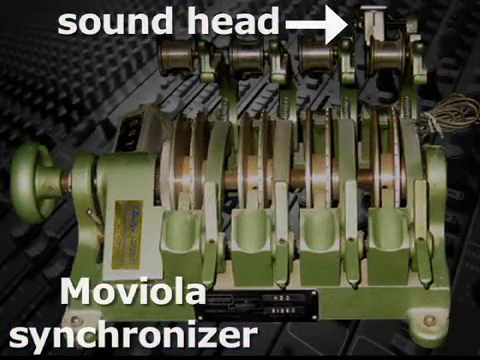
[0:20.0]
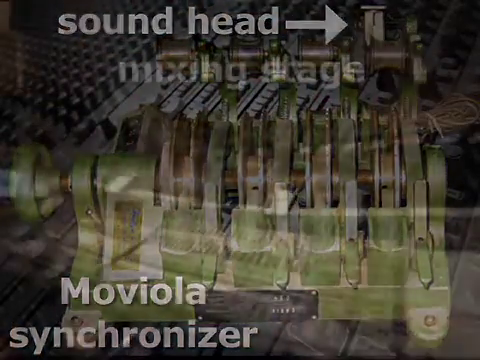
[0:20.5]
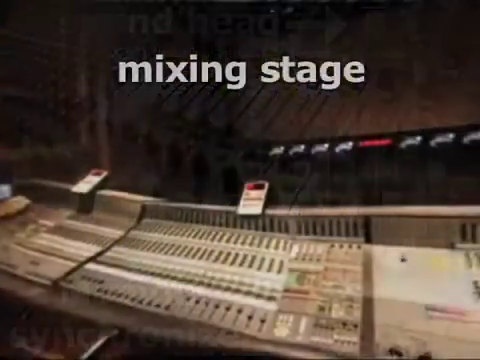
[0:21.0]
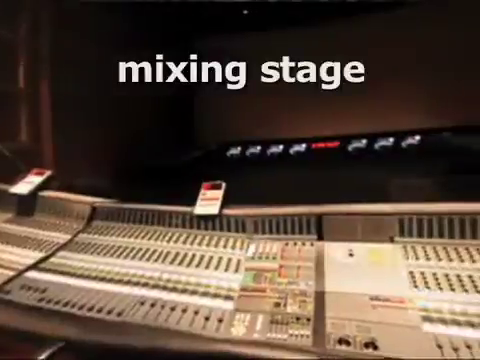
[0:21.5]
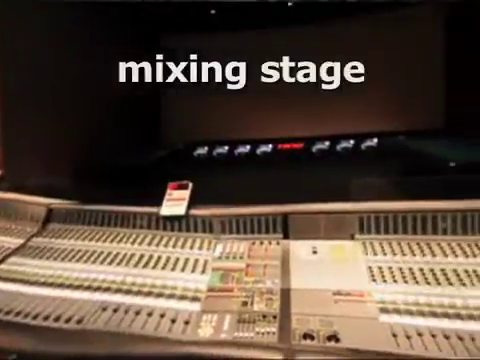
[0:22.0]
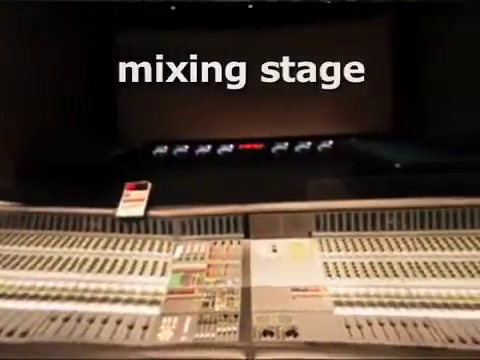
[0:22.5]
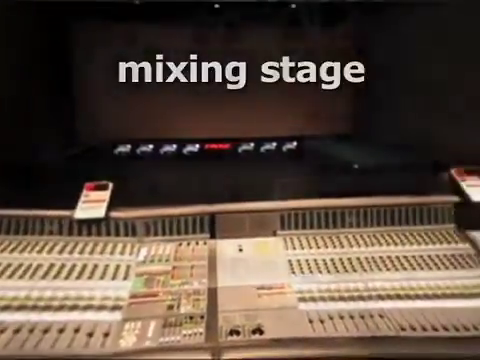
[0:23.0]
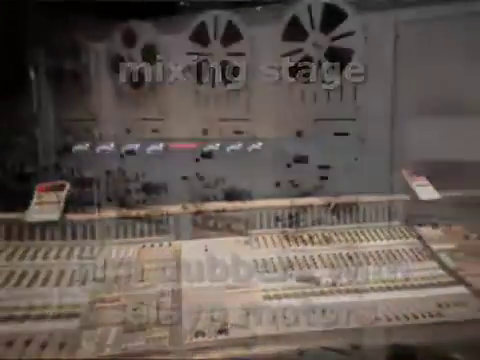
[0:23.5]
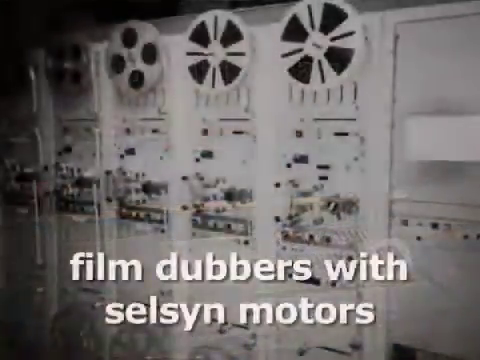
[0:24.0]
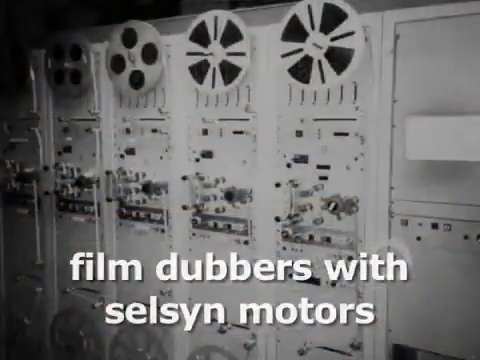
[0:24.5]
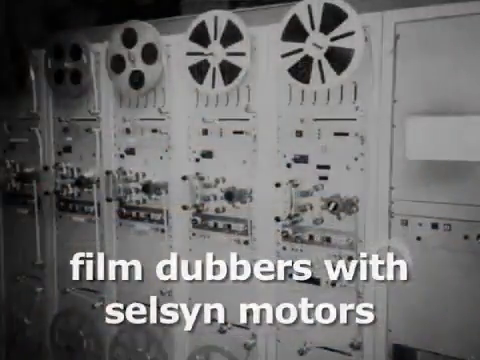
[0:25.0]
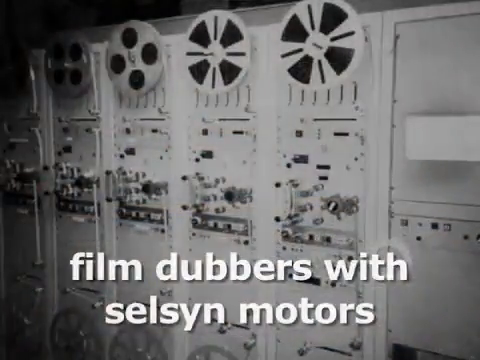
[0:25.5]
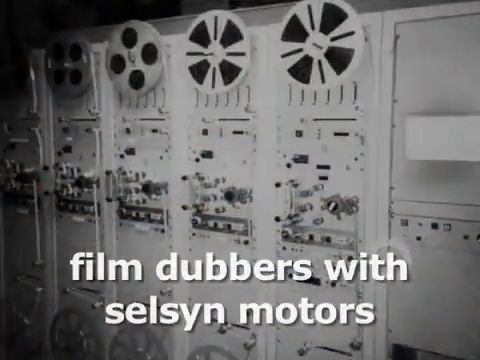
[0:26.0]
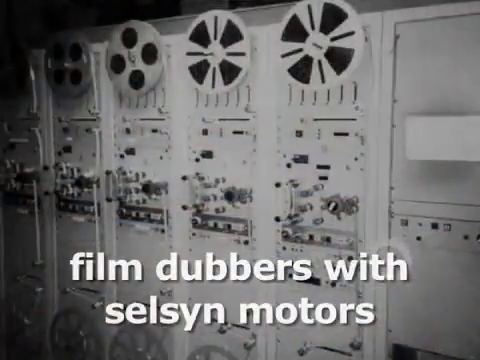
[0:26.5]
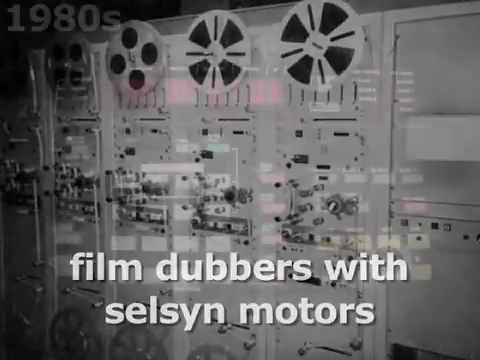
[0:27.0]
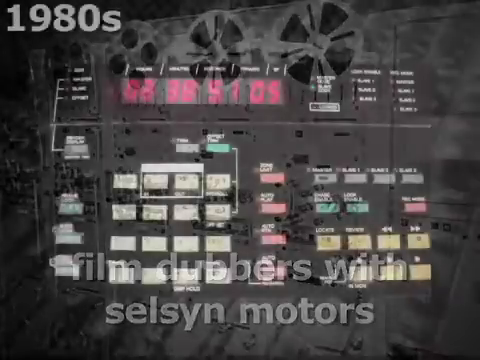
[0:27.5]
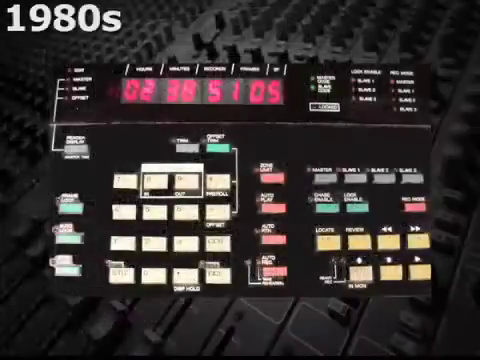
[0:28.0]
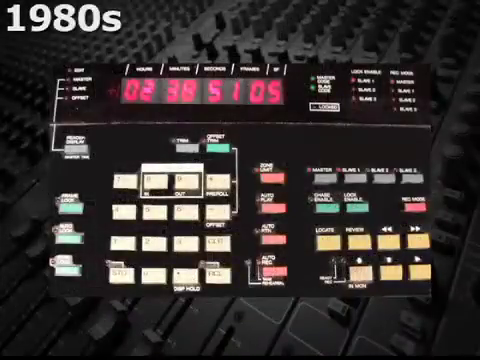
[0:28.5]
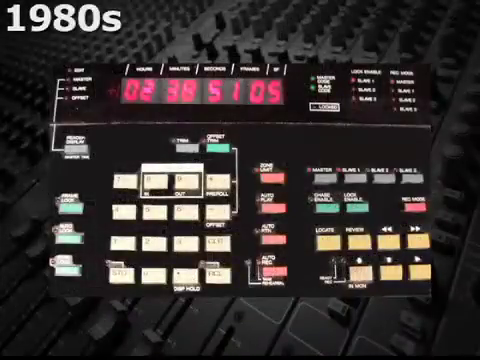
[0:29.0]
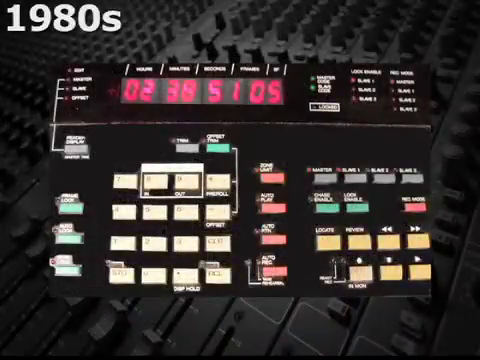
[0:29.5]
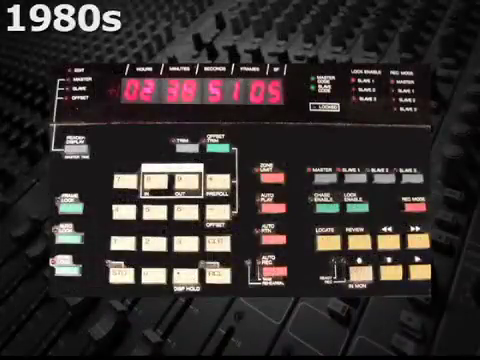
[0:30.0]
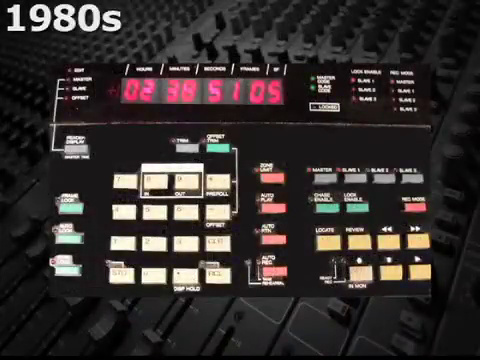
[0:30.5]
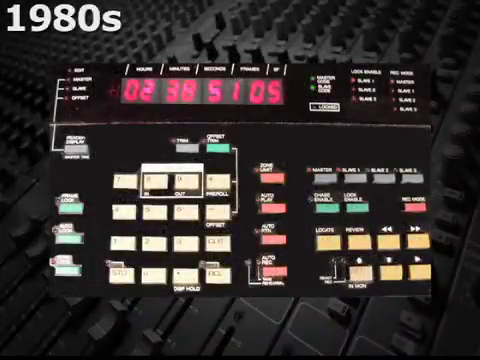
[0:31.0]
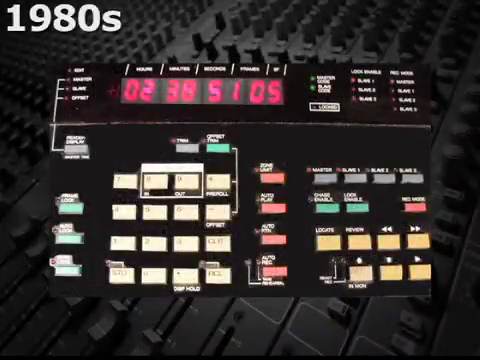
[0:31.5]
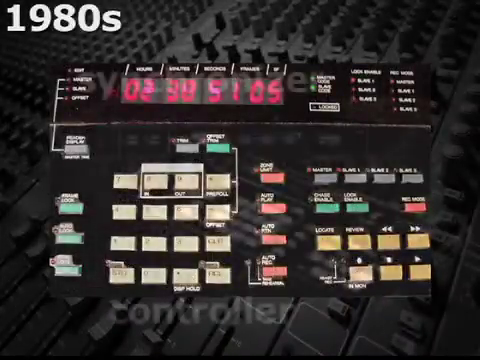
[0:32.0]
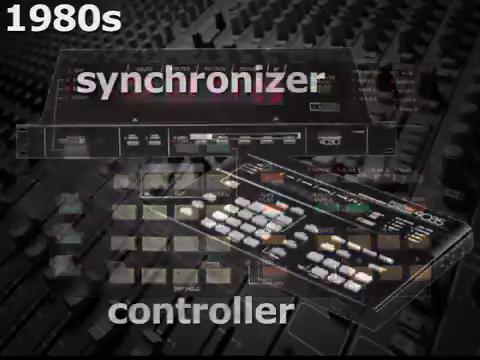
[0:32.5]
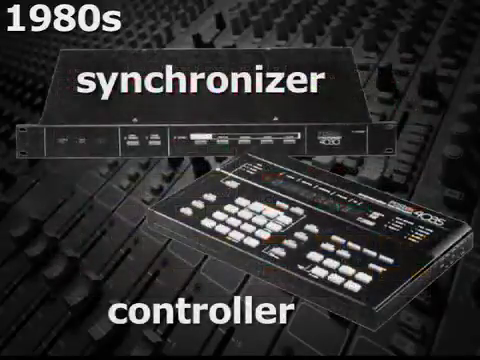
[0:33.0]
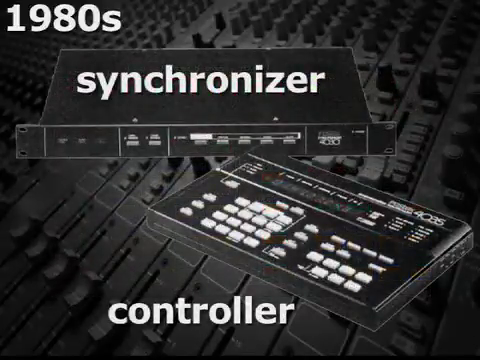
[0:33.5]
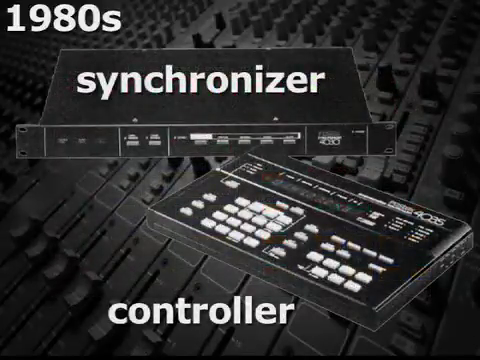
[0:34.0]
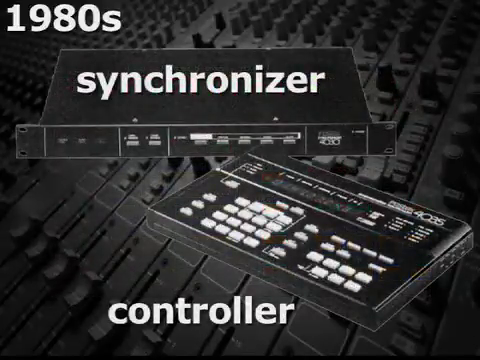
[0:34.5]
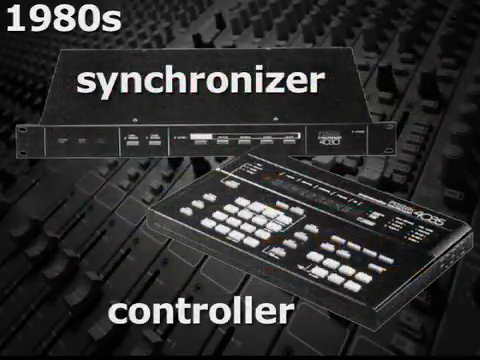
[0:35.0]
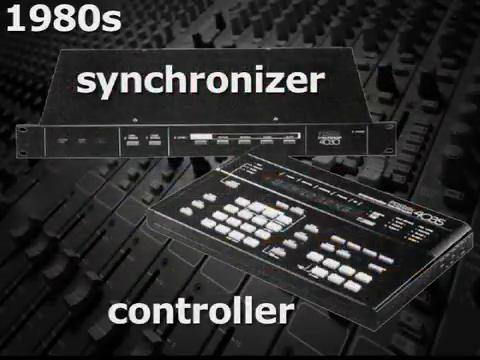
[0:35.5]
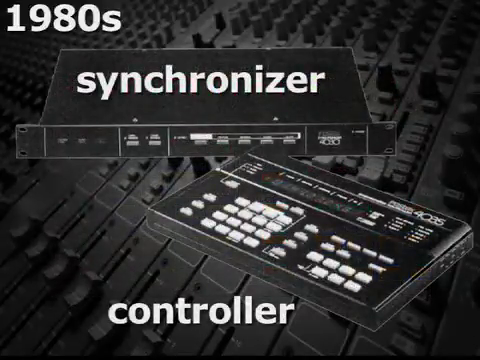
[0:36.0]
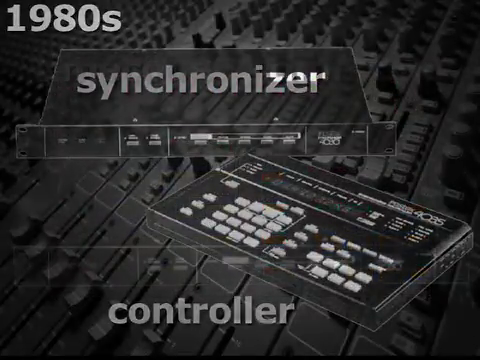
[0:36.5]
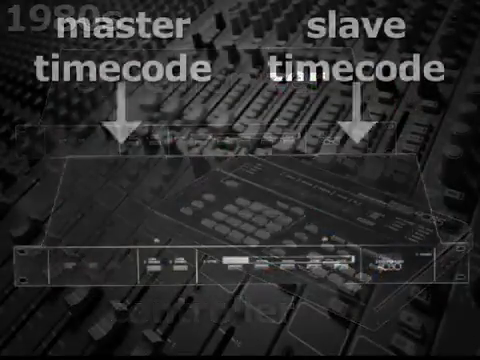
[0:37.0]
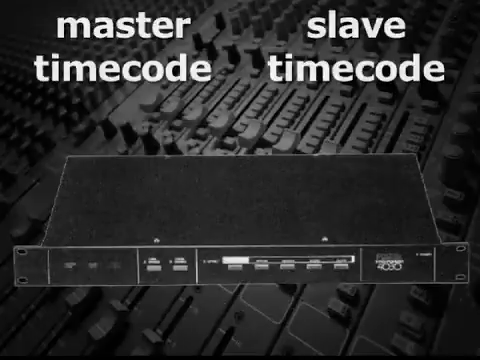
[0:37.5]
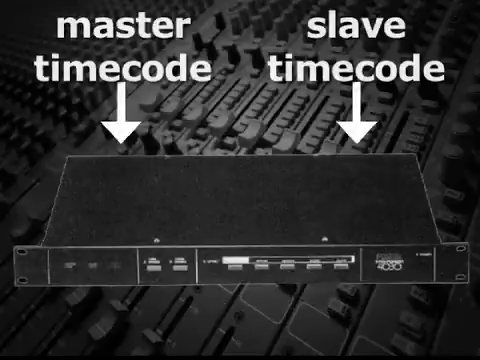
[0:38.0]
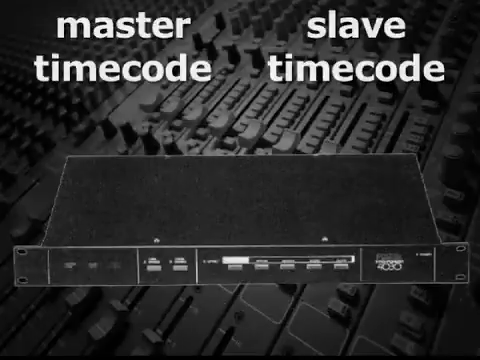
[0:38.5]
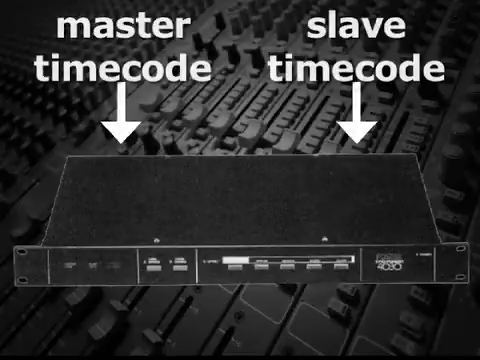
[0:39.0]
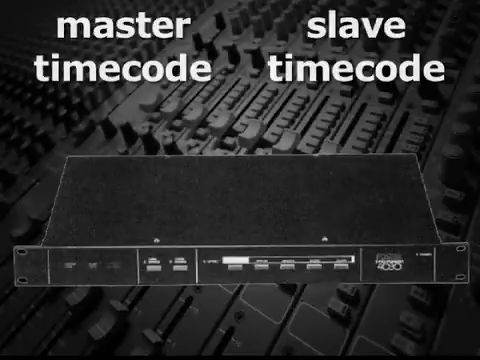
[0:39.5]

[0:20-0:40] The Moviola synchroniser is on screen. A panning shot follows of what looks like a music studio, with a lot of desks with banks of controls, and above them white text reads "mixing stage". Next come what look like data recorders with old-school tape feeds, labelled "film dubbers". Another screen shows a device that looks like a much smaller box with "1980s" on the top, apparently a more modern synthesizer. It has a digital display at the top showing various numbers and several buttons, some highlighted and some with text next to them. This flashes away to what looks like a more diagrammatic version of a similar thing, labelled "synchroniser controller". Then what looks like "master timecode" and "slave timecode" appear, which seem to be different settings or variants available on that machine.